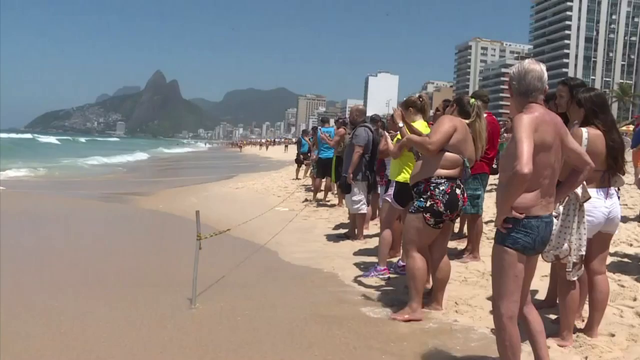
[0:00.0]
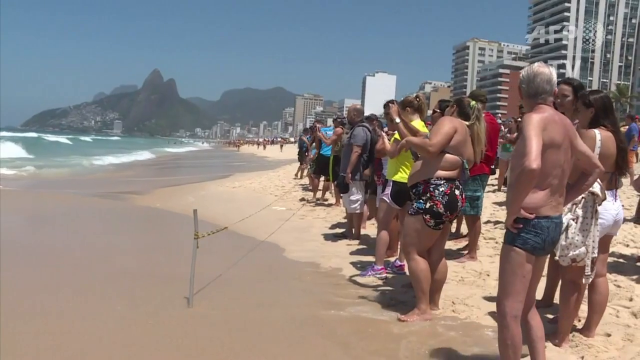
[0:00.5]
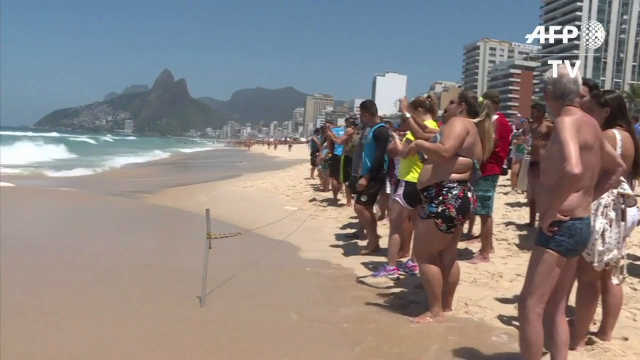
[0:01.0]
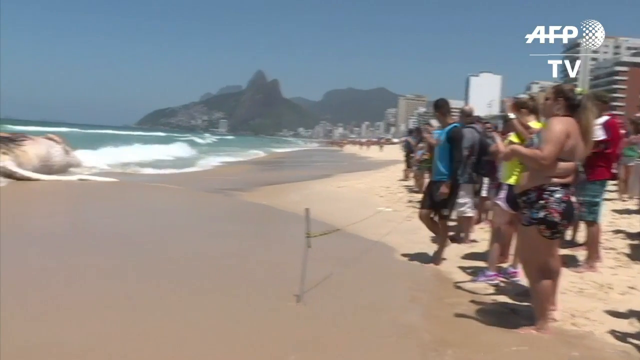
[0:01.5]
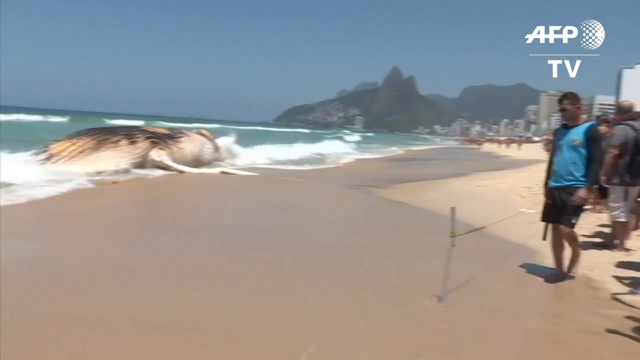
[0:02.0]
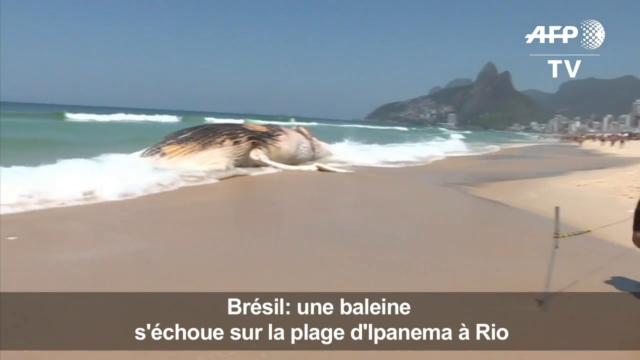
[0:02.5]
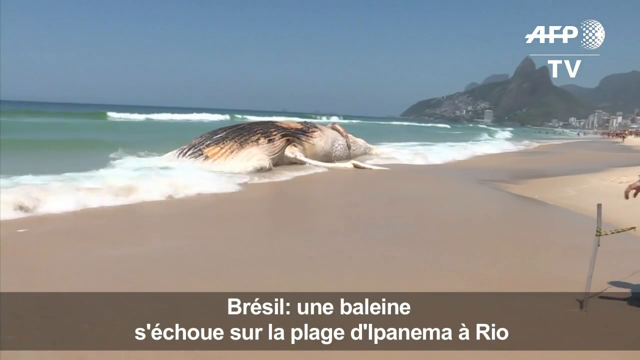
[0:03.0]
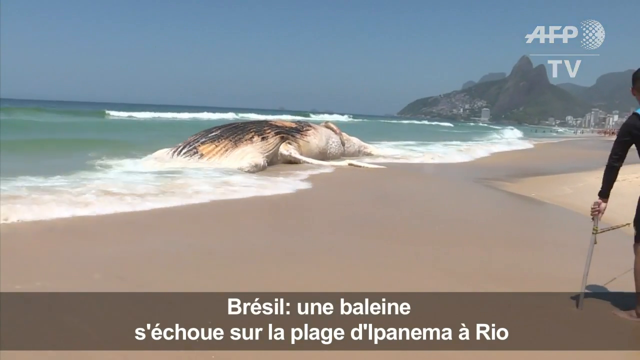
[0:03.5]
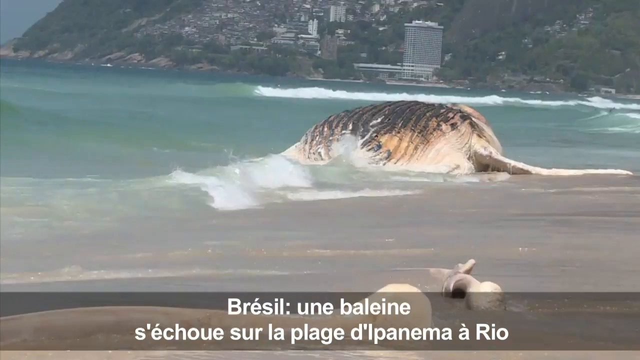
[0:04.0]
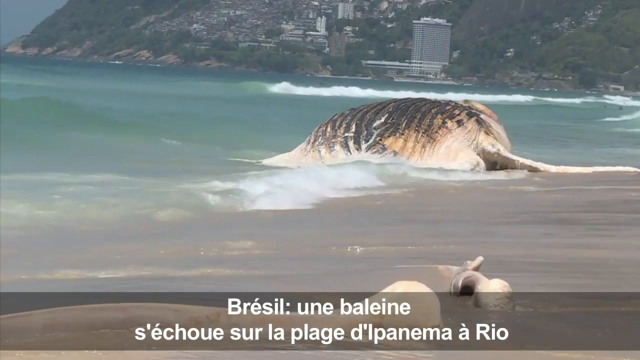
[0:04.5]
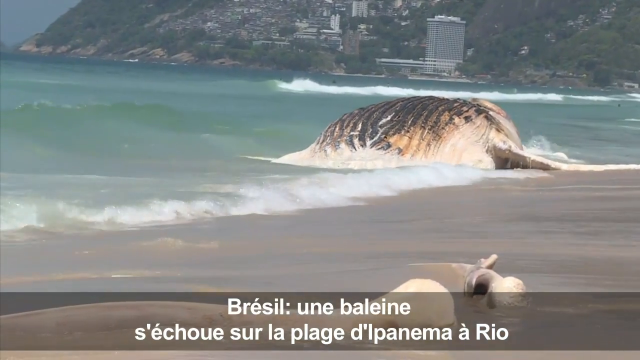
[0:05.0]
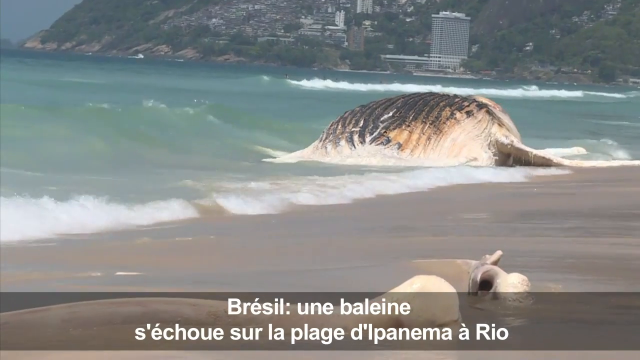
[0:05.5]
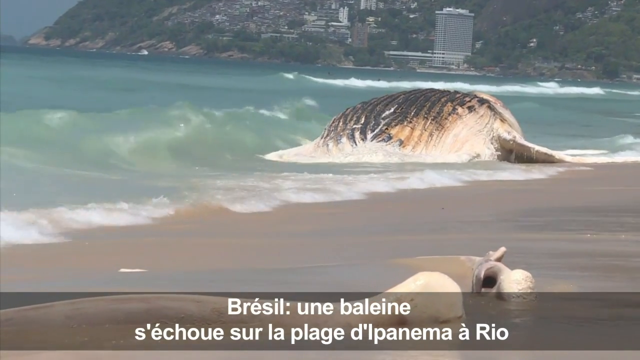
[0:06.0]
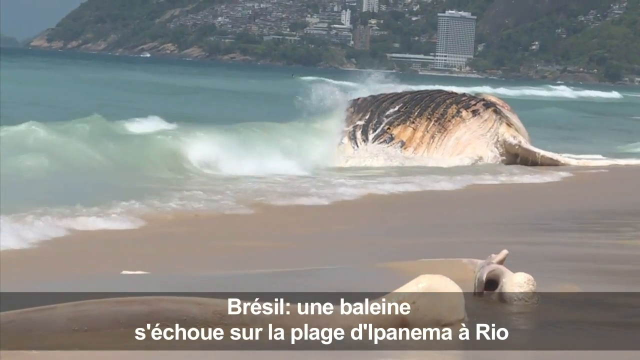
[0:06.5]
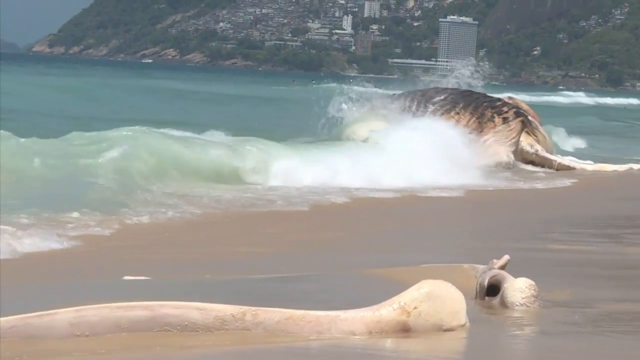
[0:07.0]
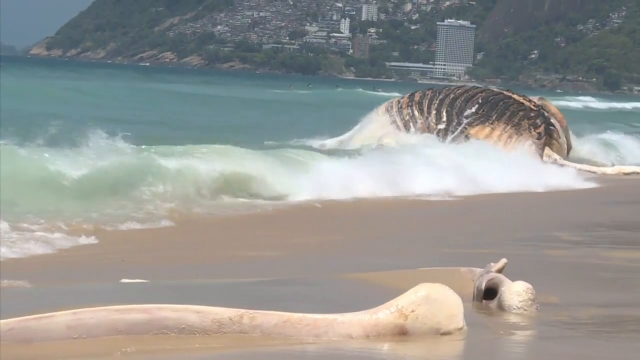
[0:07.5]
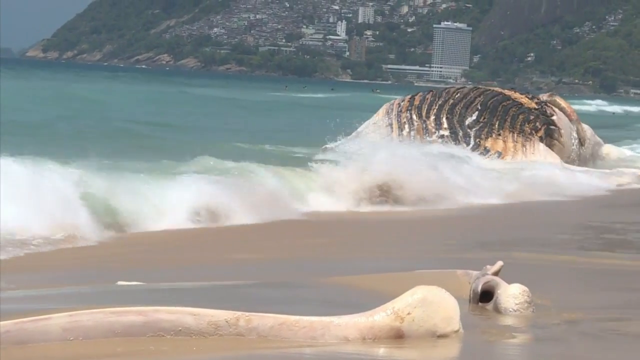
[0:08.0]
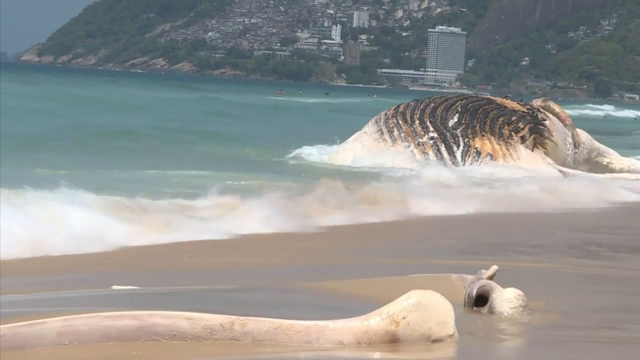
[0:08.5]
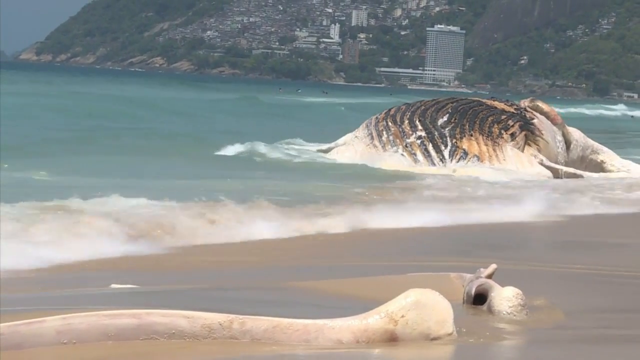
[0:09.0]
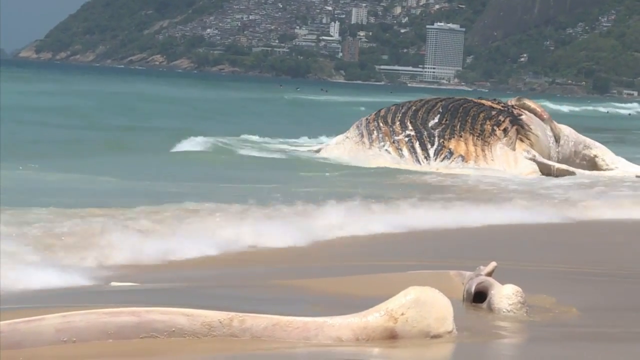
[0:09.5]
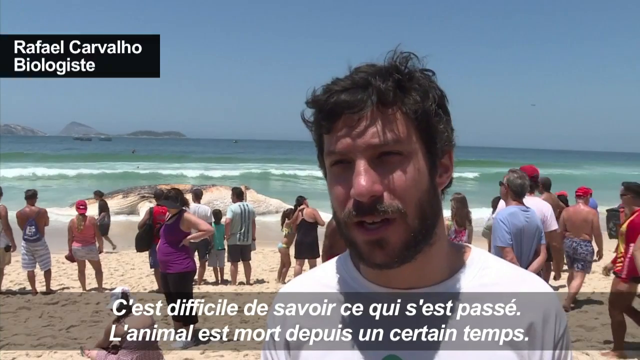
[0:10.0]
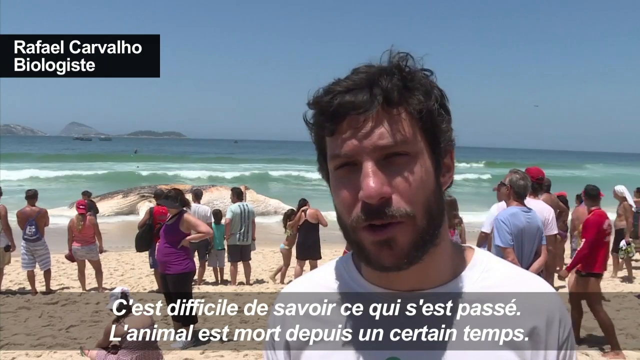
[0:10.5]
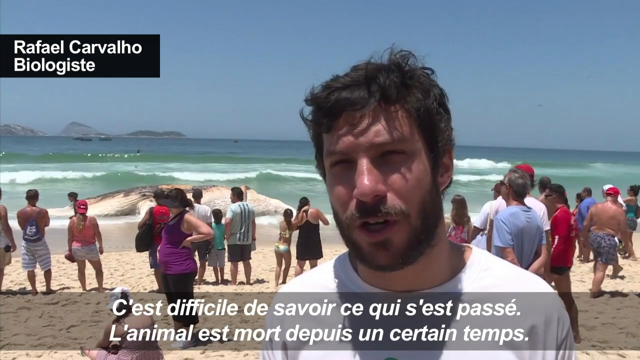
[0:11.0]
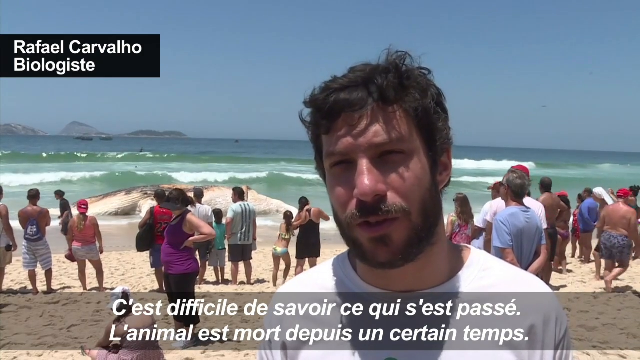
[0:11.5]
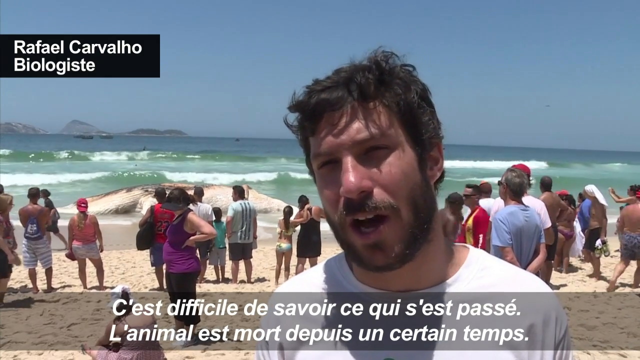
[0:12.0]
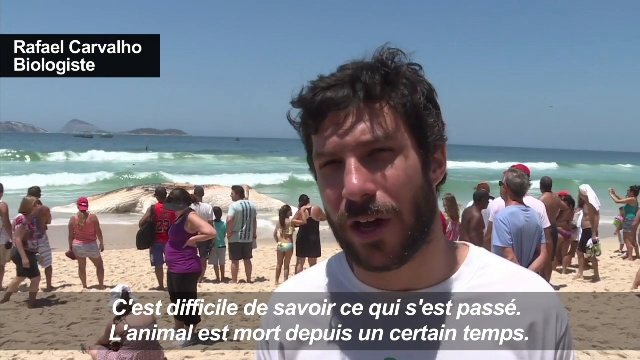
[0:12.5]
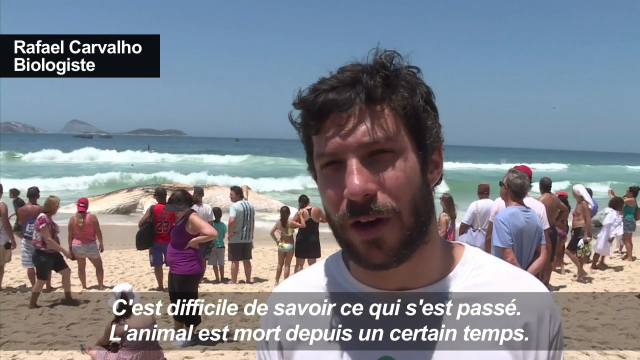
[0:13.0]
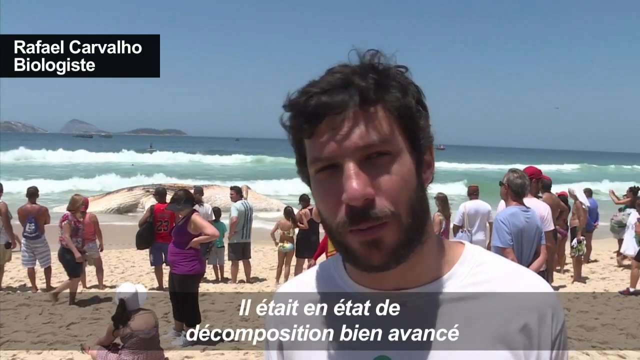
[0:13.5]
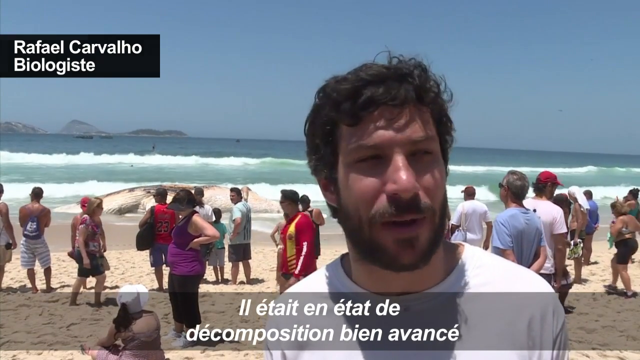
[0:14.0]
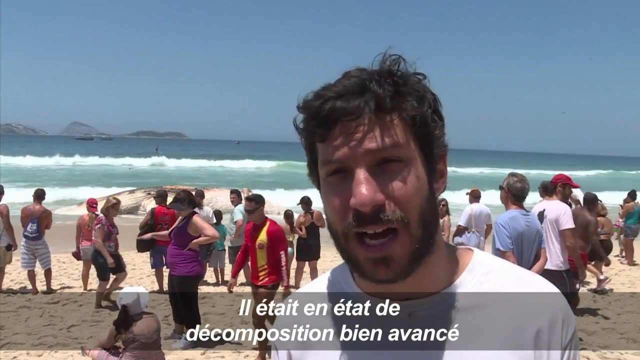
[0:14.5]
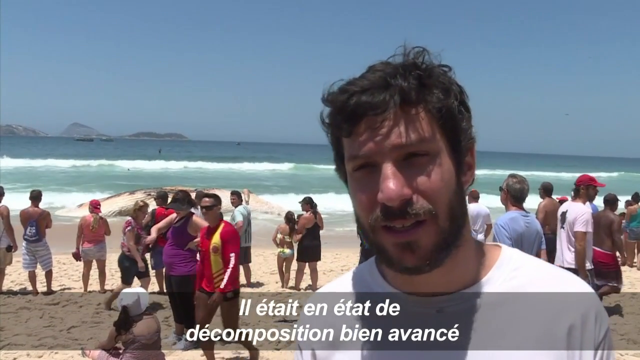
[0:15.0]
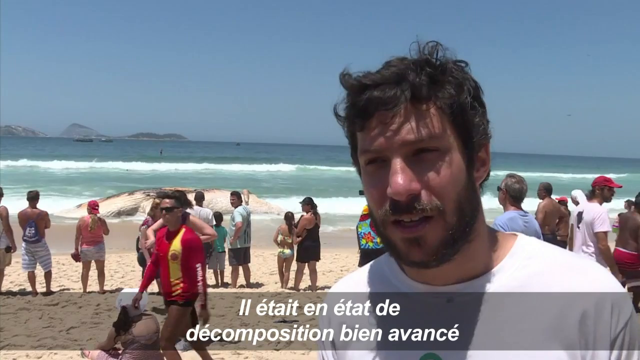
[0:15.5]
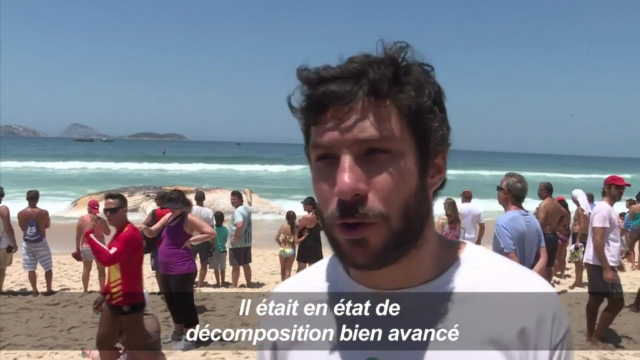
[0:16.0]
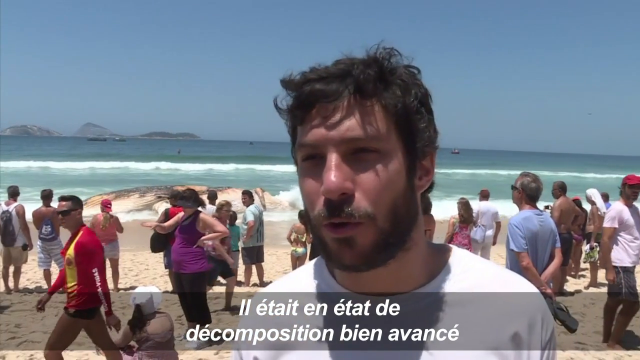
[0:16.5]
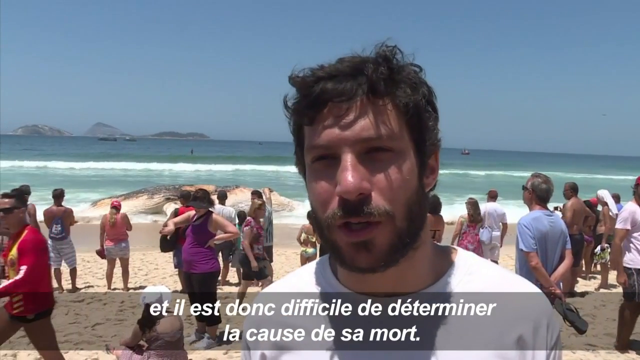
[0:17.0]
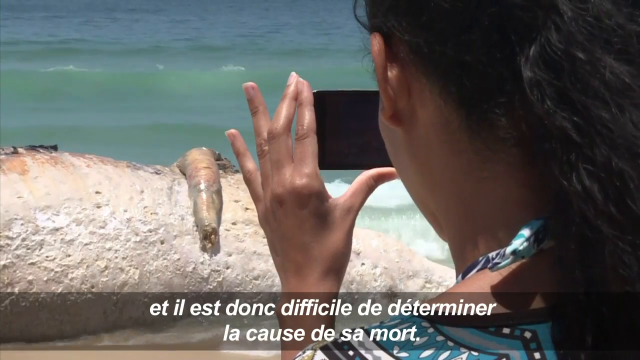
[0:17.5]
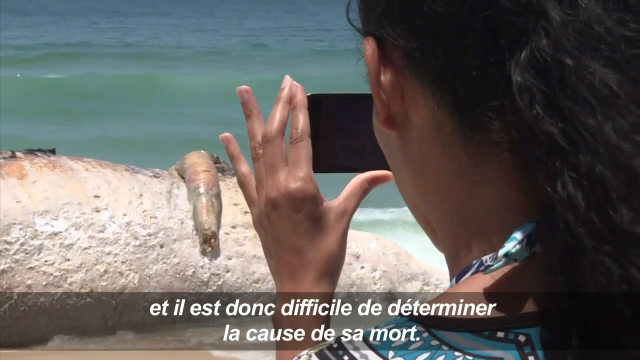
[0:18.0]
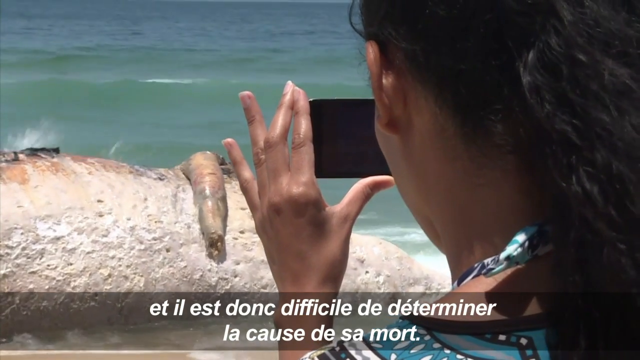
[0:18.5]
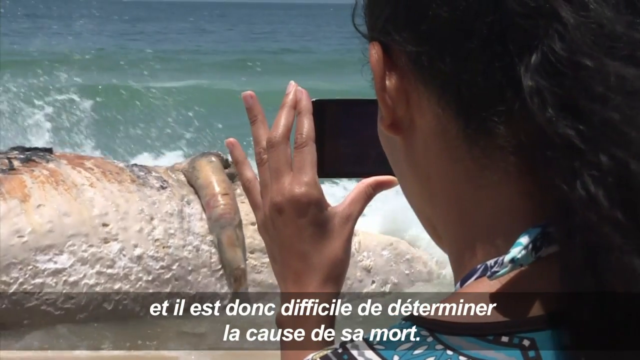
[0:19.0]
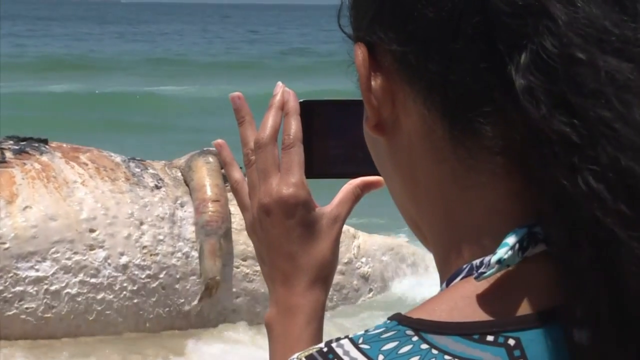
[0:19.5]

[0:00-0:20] The video opens on a sandy beach in what appears to be a tropical place, possibly Brazil. More than 20 to 30 people are gathered together along the beach, looking at something. The sand is not very clean, and a giant white whale lies washed up on the shore. A man who seems to be a biologist, named Rafael Carvalho, is interviewed; the day is very sunny and the sky is quite clear. The interview is on a TV channel called AFP TV, seemingly a Brazilian channel. Some men are half naked, dressed for beach activities.